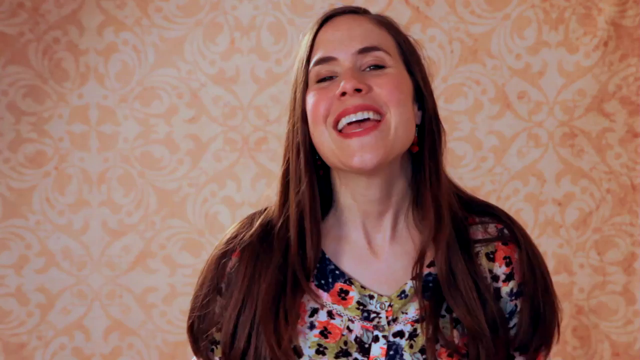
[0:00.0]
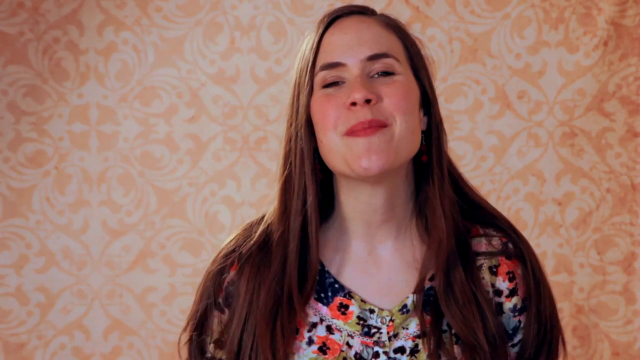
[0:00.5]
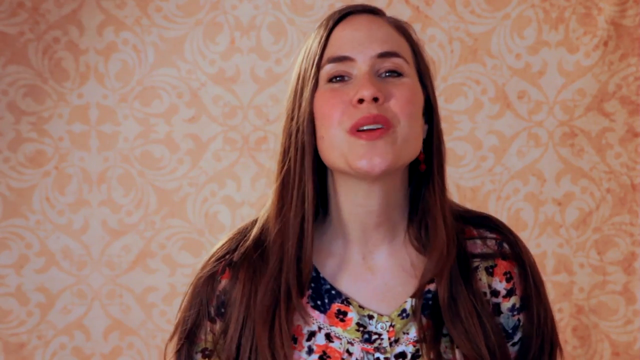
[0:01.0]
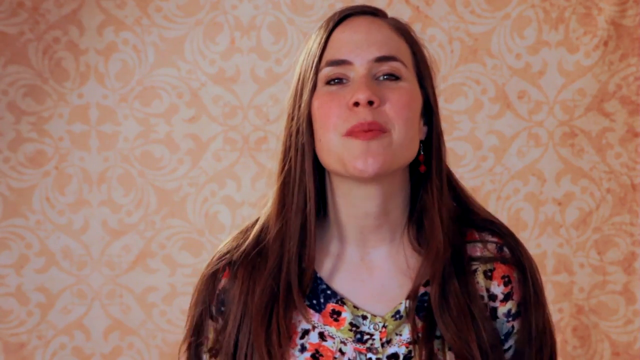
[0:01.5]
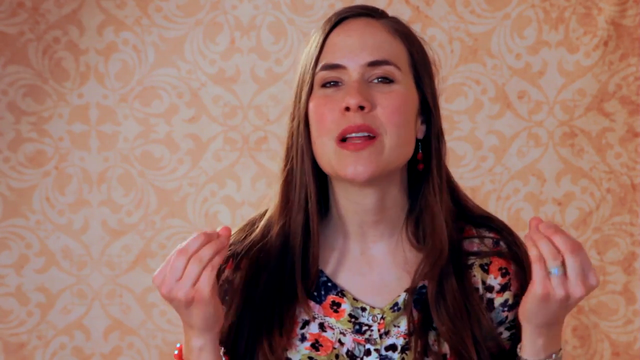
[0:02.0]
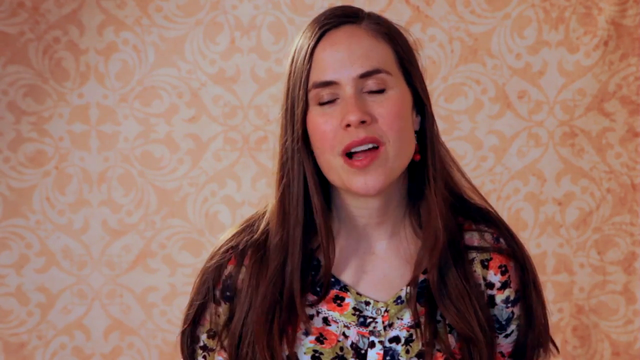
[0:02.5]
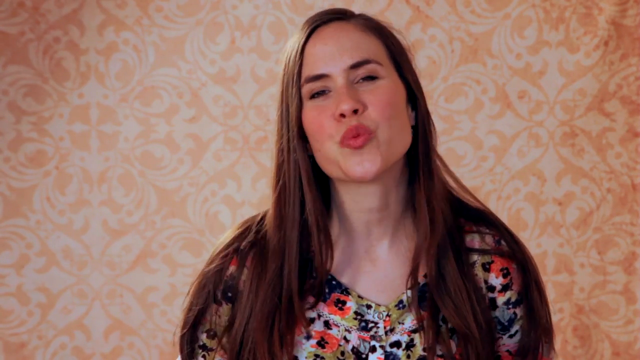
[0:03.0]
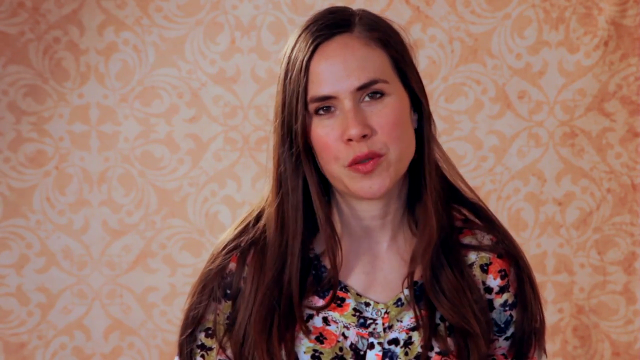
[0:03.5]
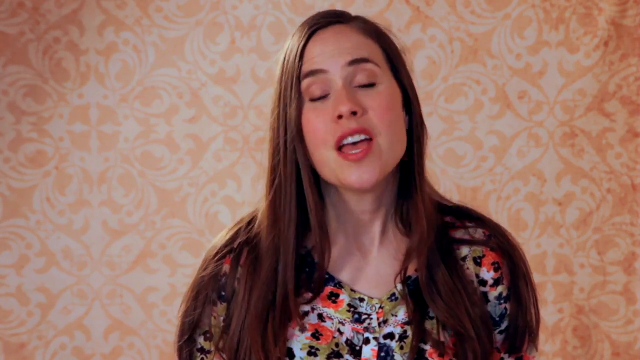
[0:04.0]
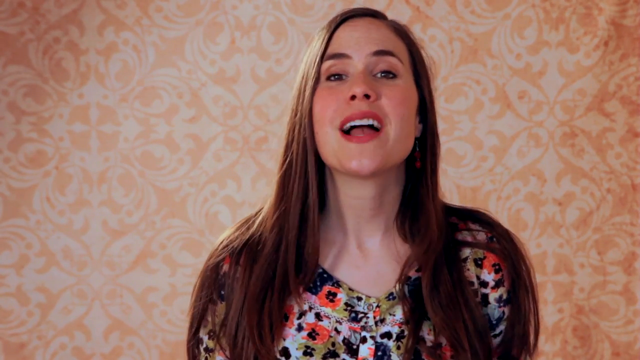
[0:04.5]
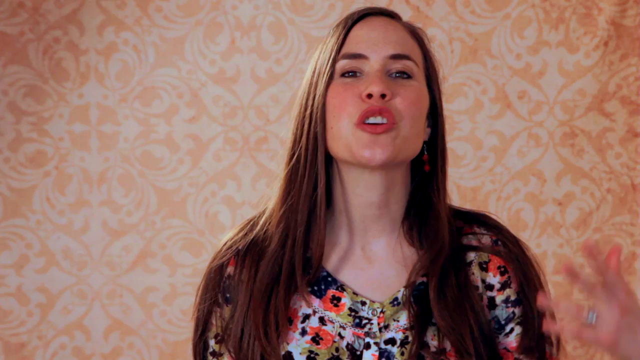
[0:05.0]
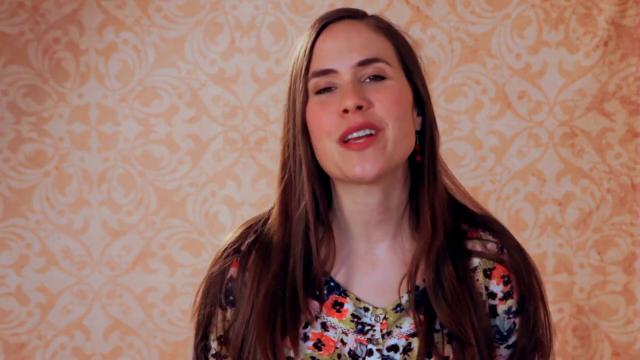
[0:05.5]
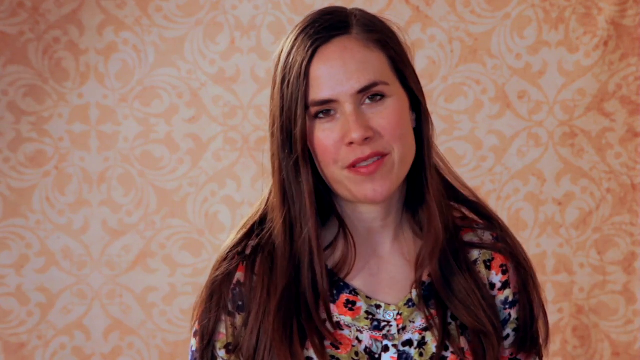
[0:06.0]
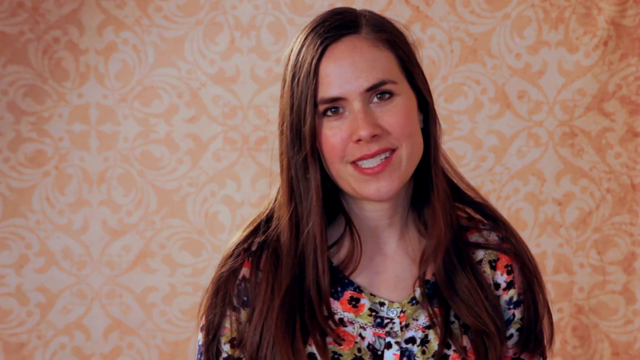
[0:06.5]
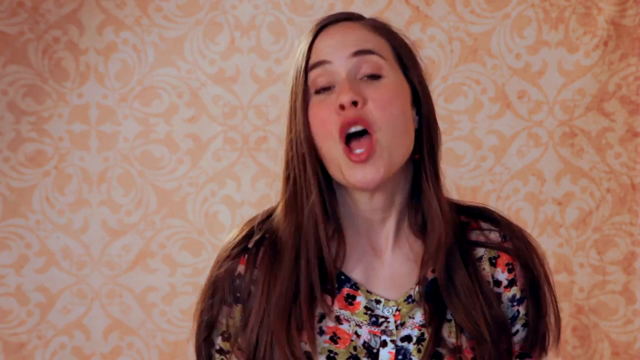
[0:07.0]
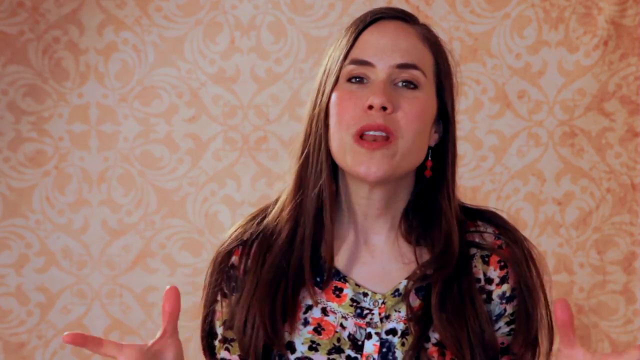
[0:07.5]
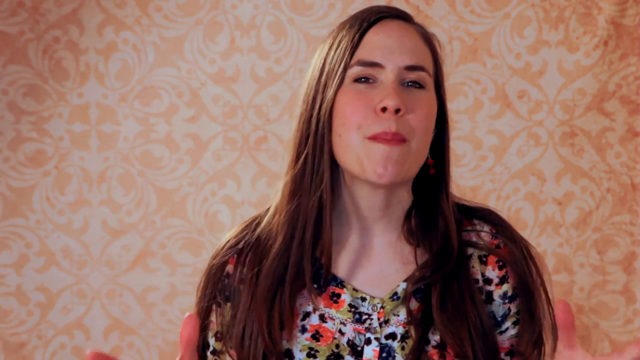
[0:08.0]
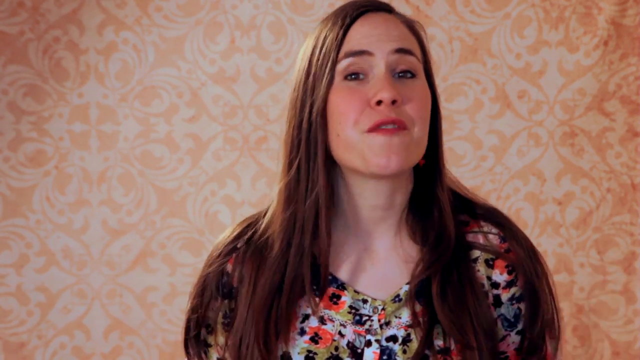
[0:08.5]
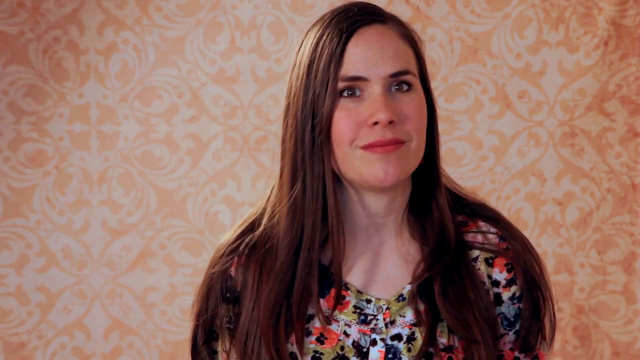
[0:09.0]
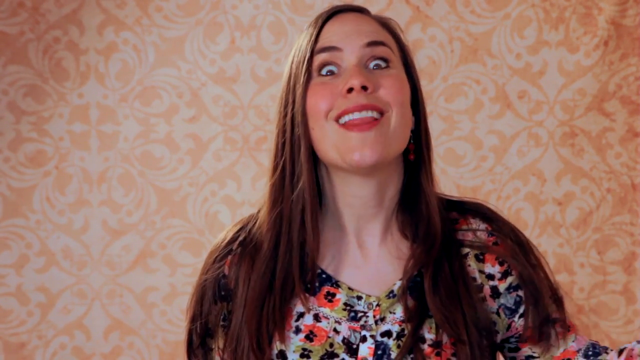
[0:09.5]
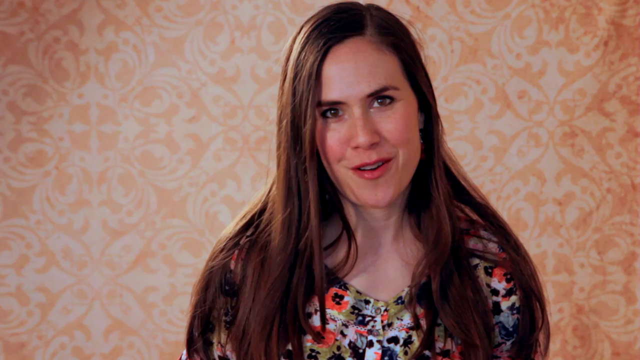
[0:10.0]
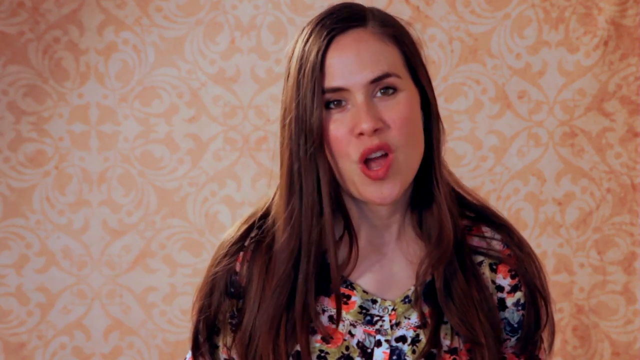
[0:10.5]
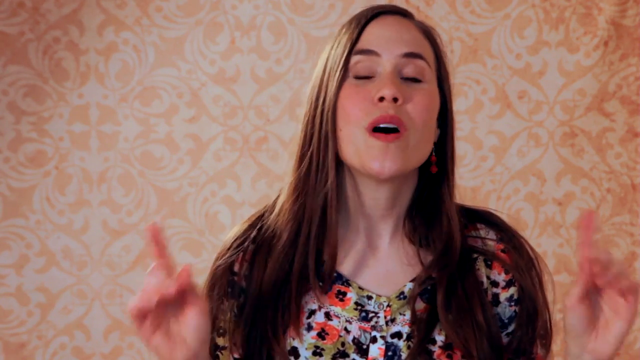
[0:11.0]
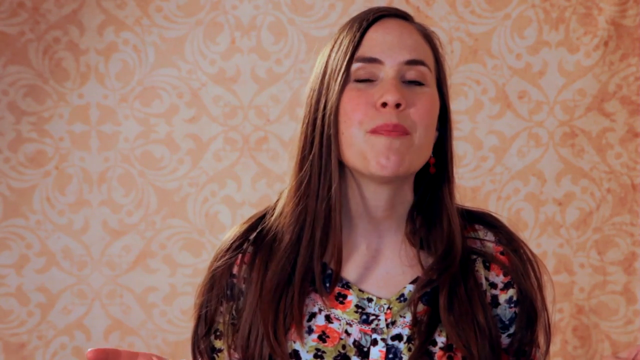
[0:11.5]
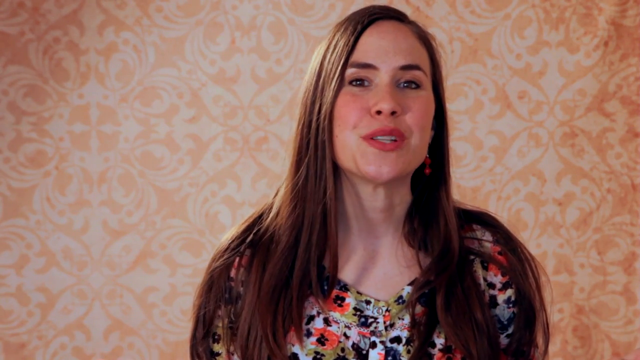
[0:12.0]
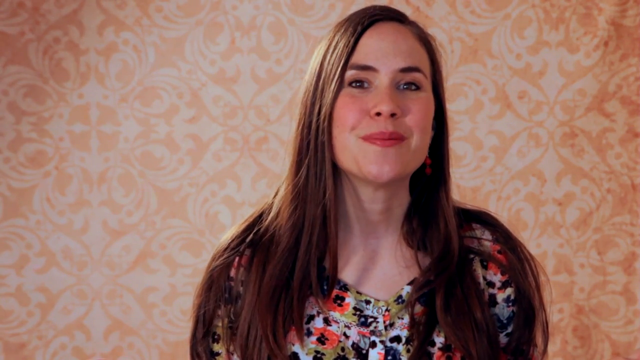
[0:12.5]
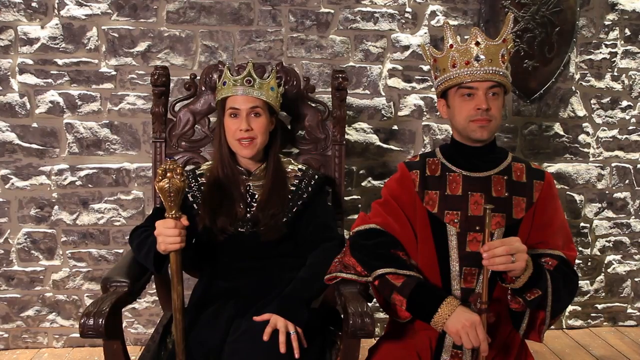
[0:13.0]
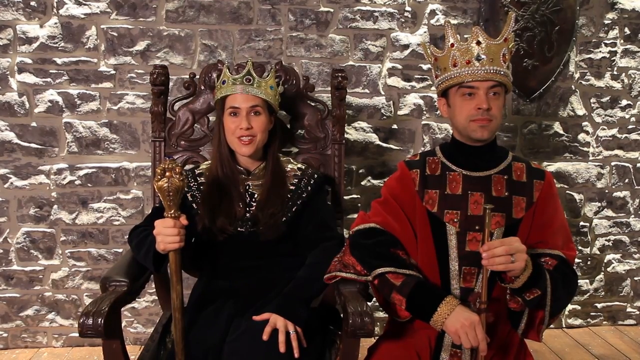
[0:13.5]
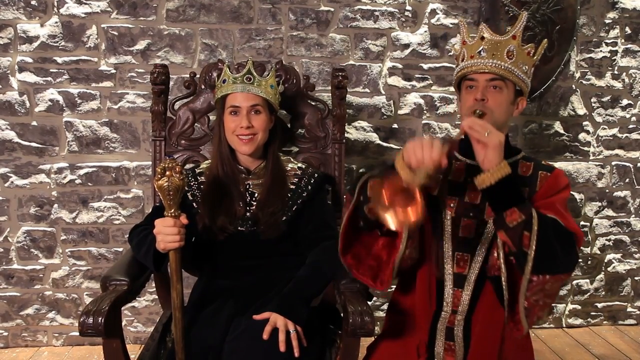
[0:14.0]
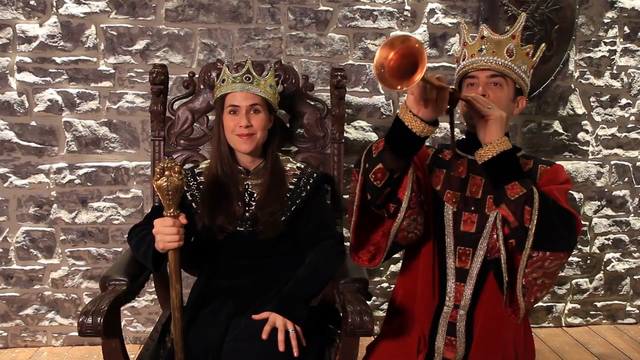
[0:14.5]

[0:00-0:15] A woman speaks into the camera in front of a fancy-looking background design. She has long, straight brown hair with no layers and makes a lot of hand gestures as she talks. She wears a floral top that covers her shoulders, neither high cut nor low cut, along with dangly earrings and lipstick. The video then cuts to her dressed in a king outfit, sitting in what looks like a medieval-type throne. Next to her is a man in another fancy medieval outfit, a red tunic with many designs on it, who blows into a trumpet. He wears what looks to be a crown, though it is not certain. She holds a king's staff of the kind medieval kings carried and wears a crown.